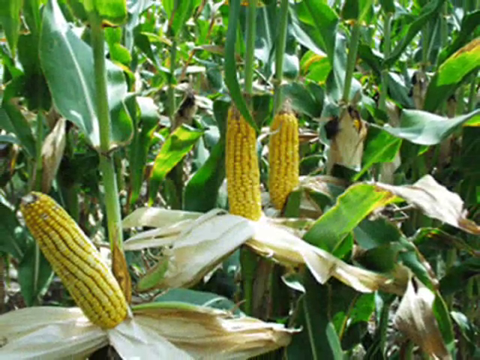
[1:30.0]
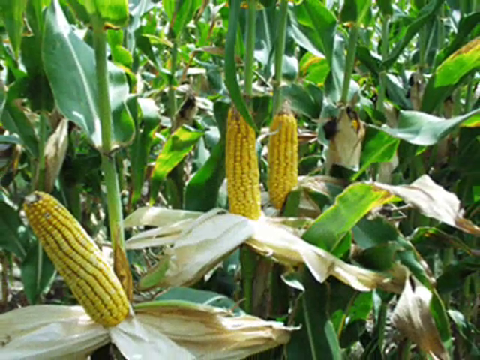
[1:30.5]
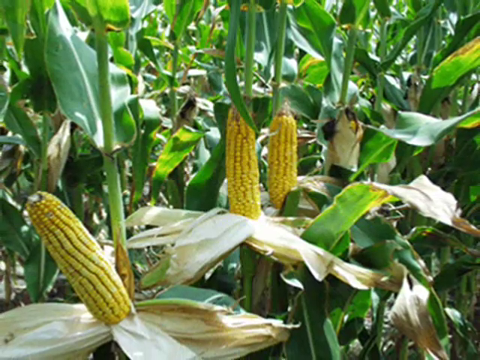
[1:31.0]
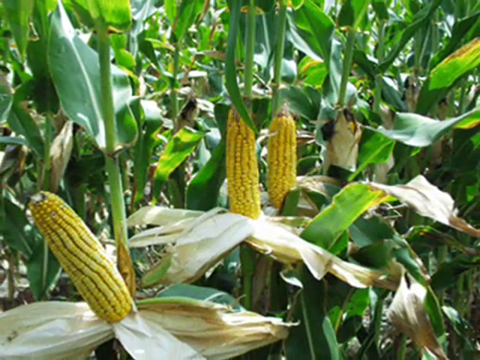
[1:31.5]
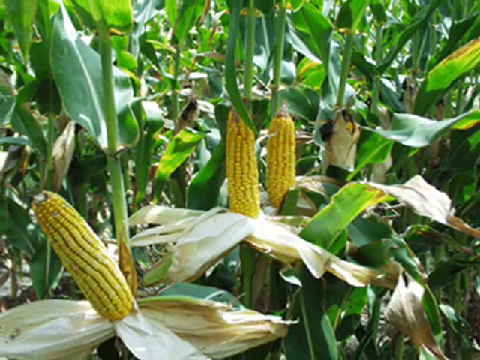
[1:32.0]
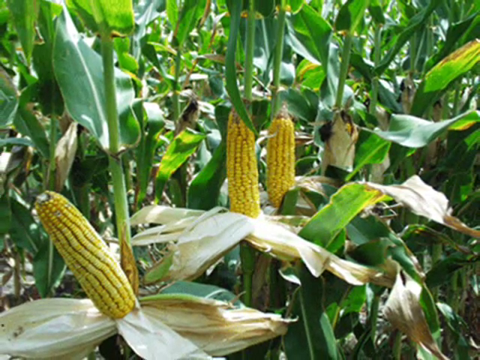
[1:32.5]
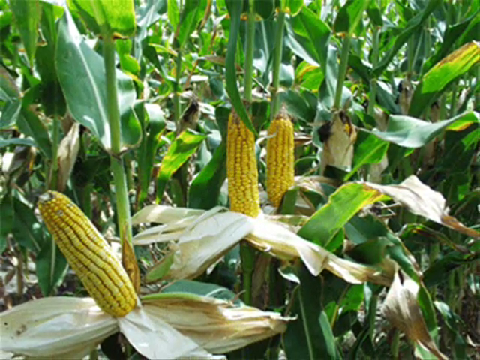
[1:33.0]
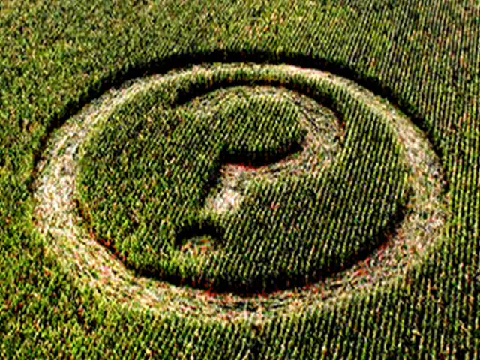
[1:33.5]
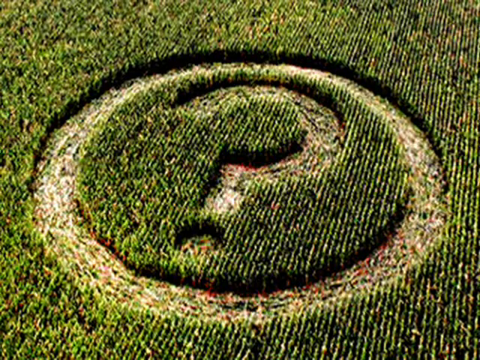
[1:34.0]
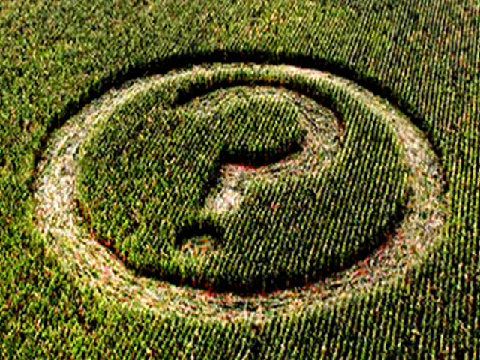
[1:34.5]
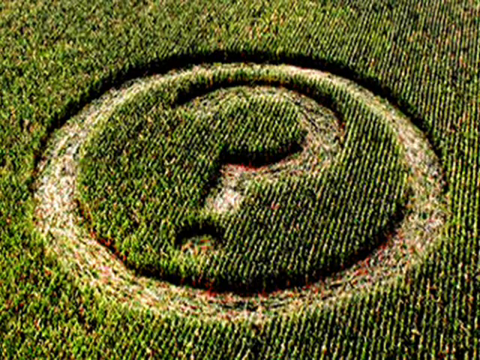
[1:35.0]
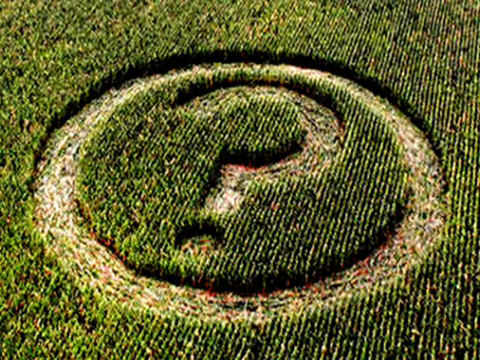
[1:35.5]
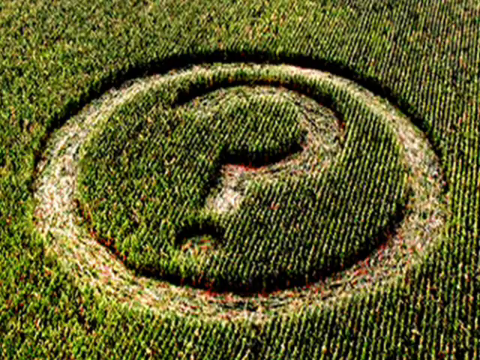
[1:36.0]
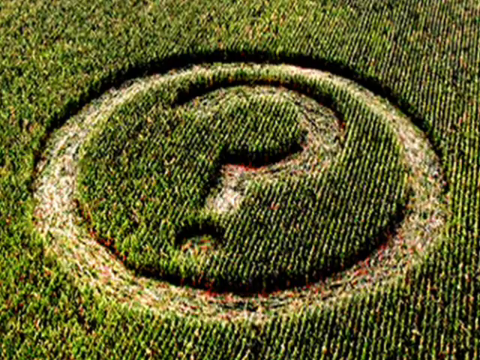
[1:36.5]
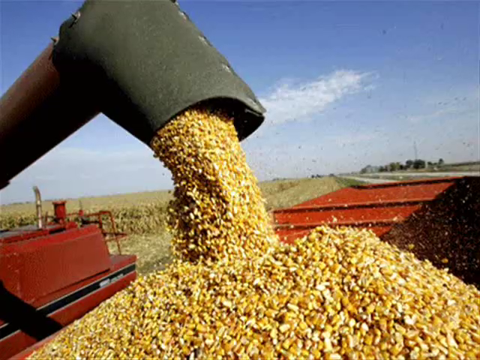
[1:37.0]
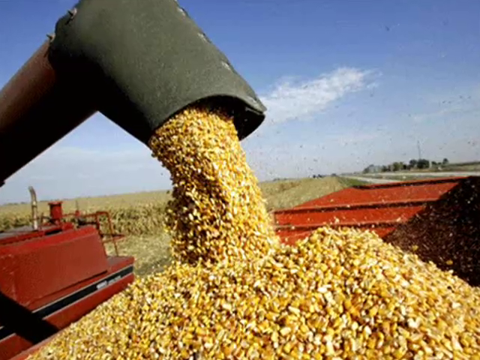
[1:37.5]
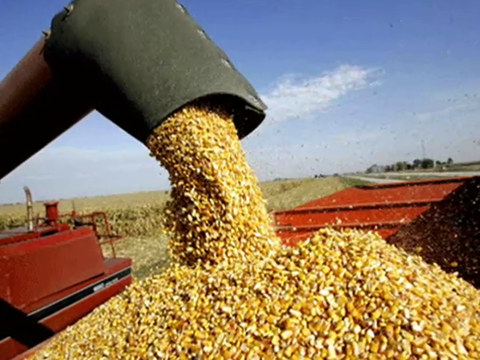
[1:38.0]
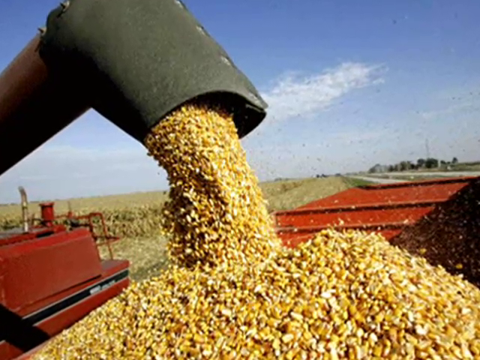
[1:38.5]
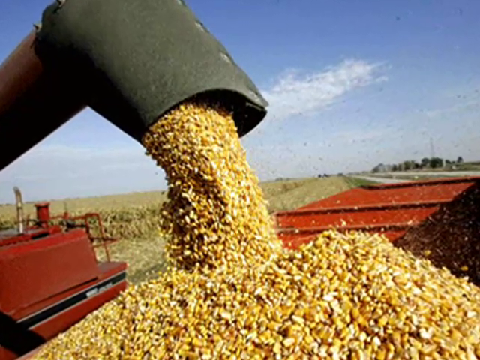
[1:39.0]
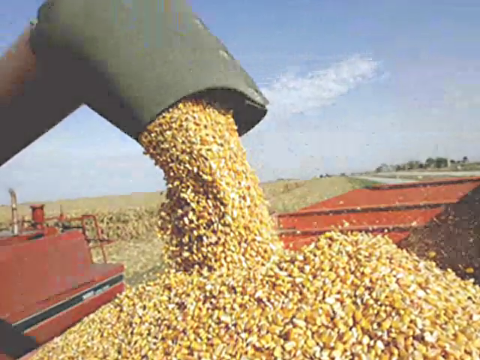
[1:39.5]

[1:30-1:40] The peeled-back corn on the stalk is shown in the cornfield, with green corn stalks all around it in the background. Then a cornfield appears with a design cut into it: a big circle with a question mark in it, very symmetrical. Next, a tractor harvests corn and blows it out into a semi truck. In the background the field appears harvested, in a fall setting, and the sky is blue with some wispy clouds.